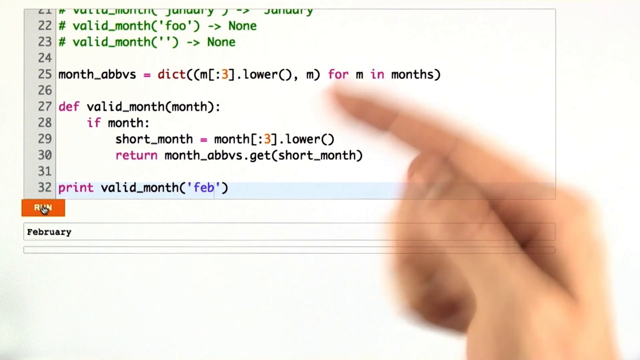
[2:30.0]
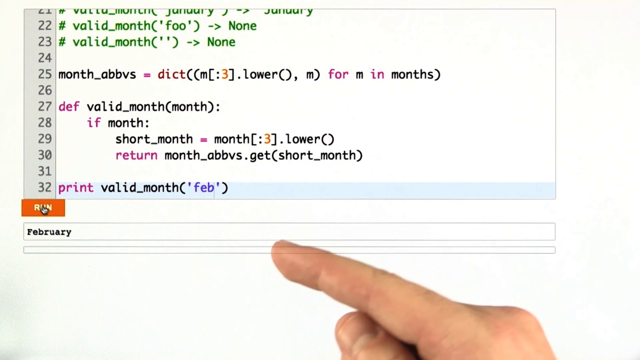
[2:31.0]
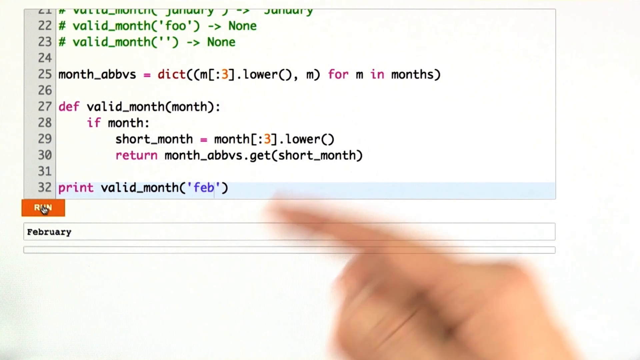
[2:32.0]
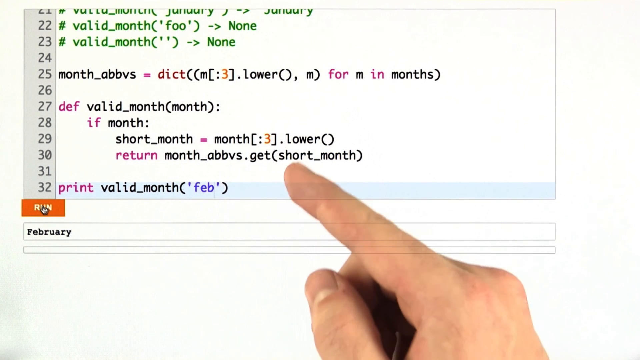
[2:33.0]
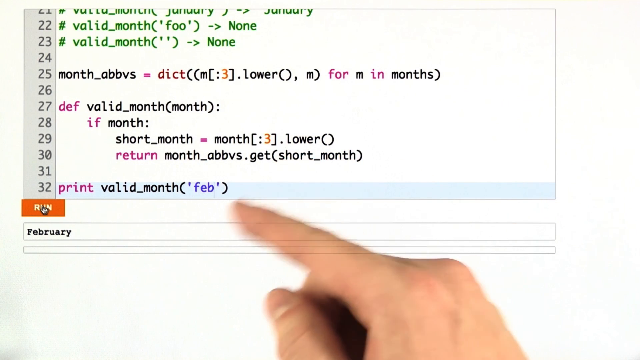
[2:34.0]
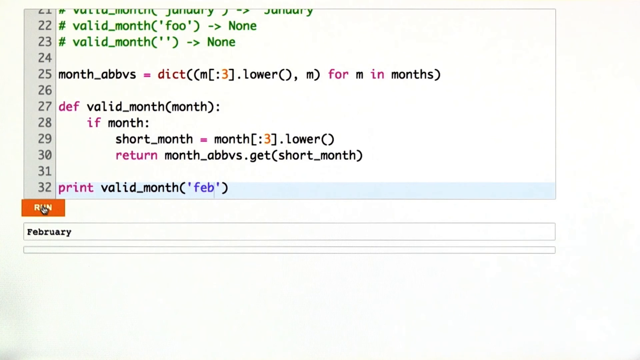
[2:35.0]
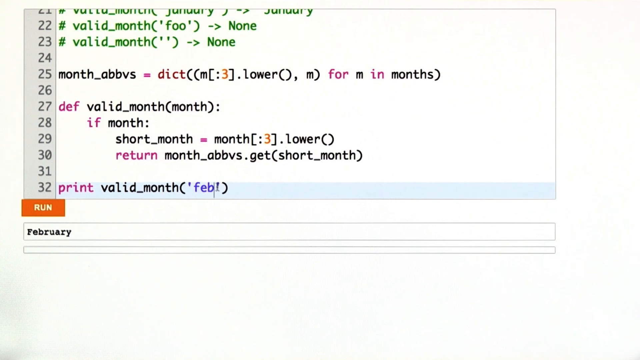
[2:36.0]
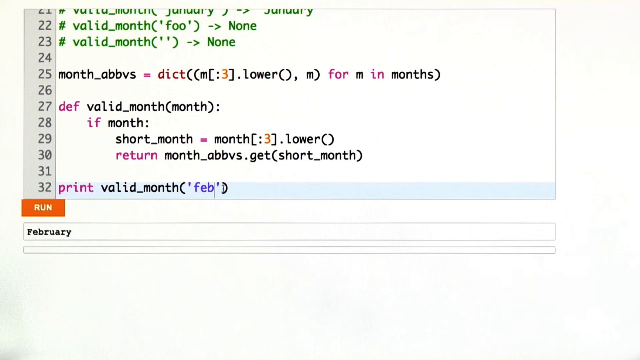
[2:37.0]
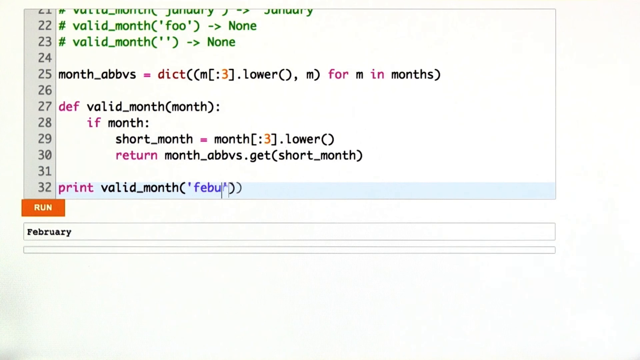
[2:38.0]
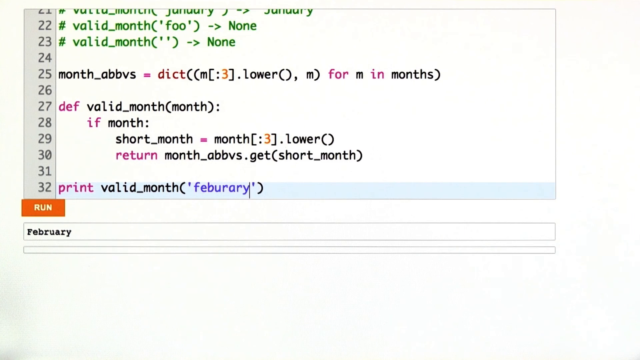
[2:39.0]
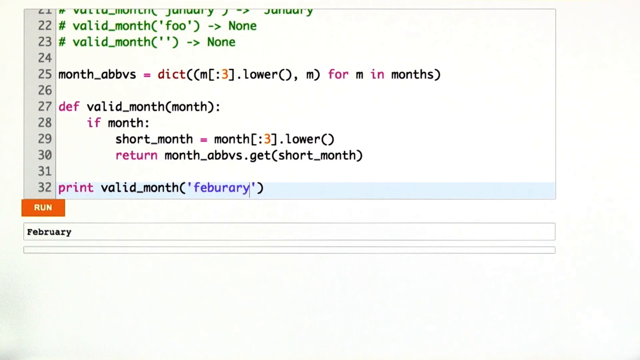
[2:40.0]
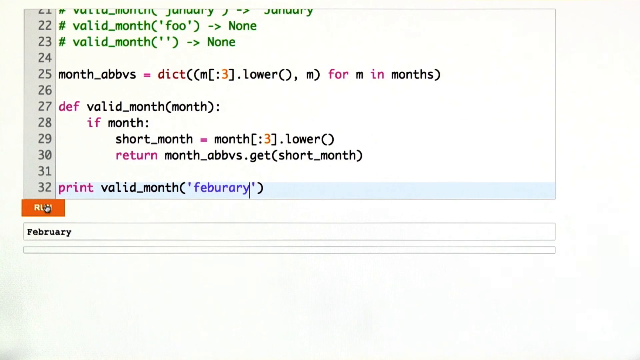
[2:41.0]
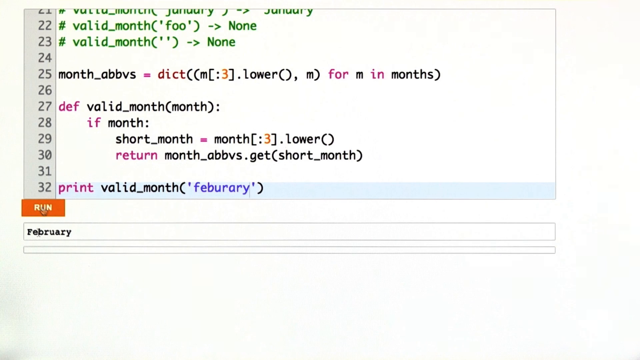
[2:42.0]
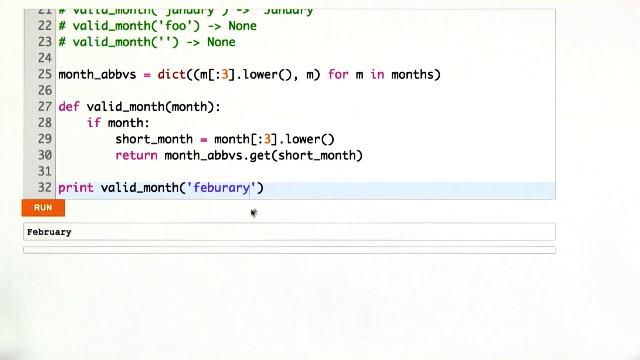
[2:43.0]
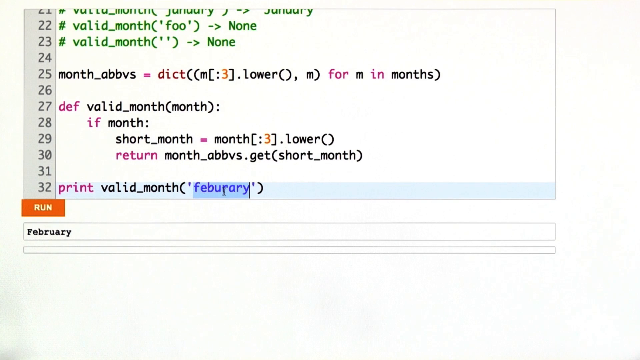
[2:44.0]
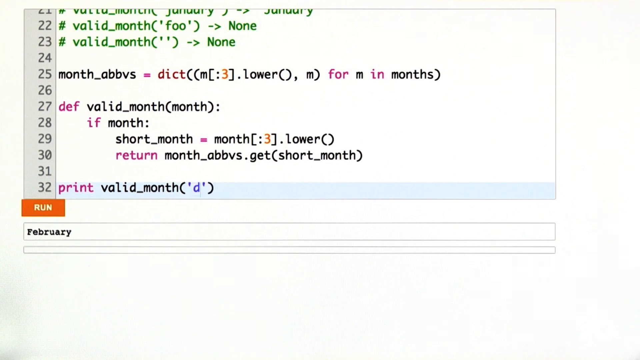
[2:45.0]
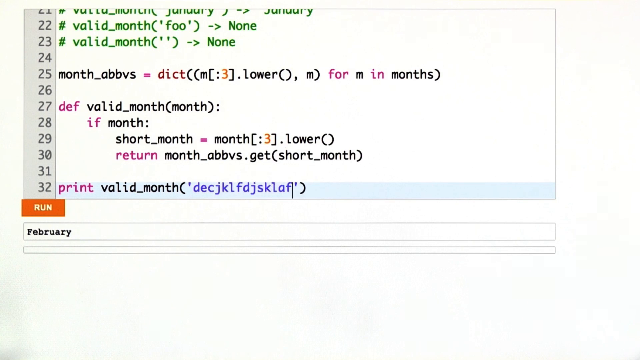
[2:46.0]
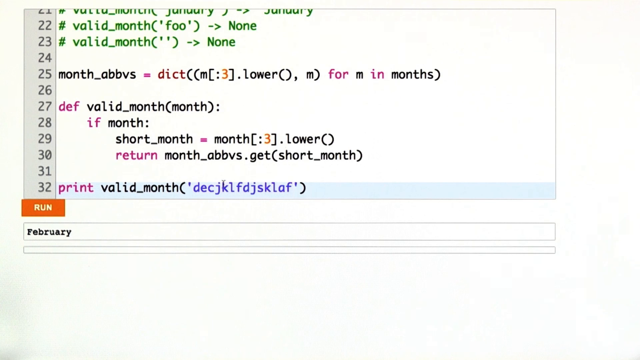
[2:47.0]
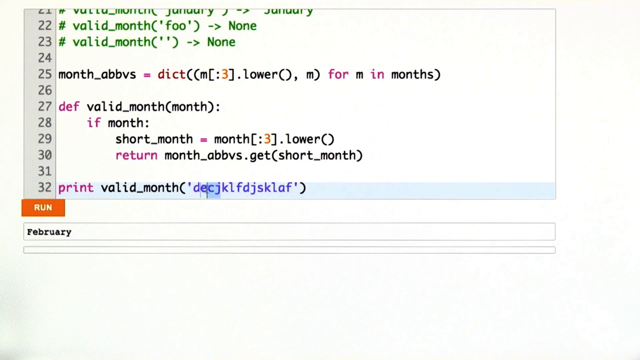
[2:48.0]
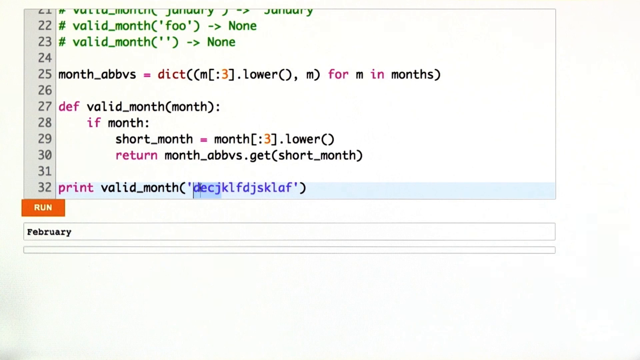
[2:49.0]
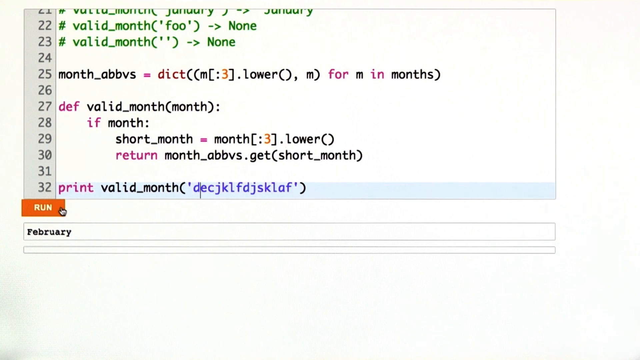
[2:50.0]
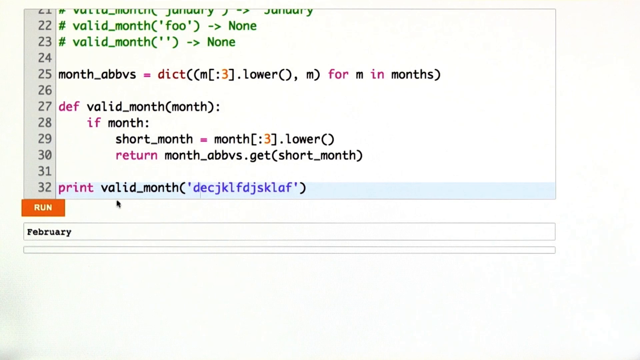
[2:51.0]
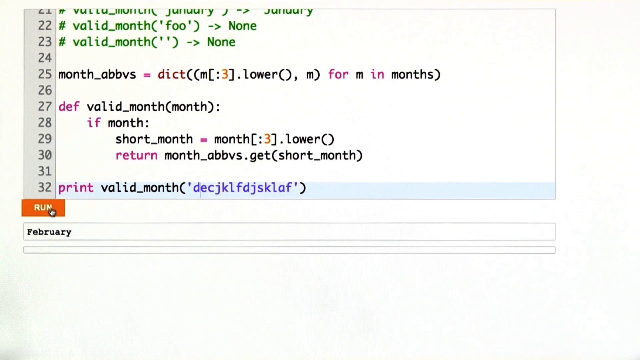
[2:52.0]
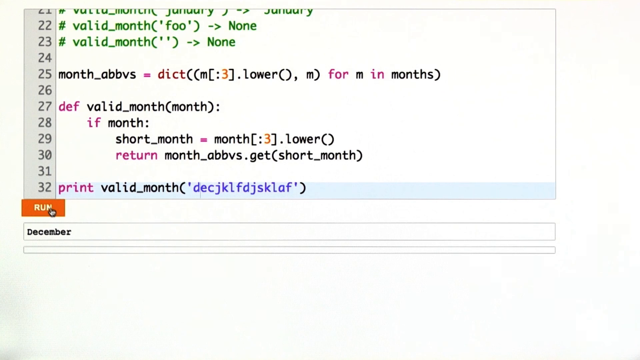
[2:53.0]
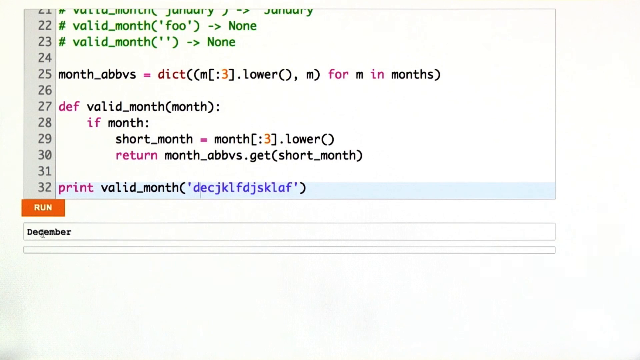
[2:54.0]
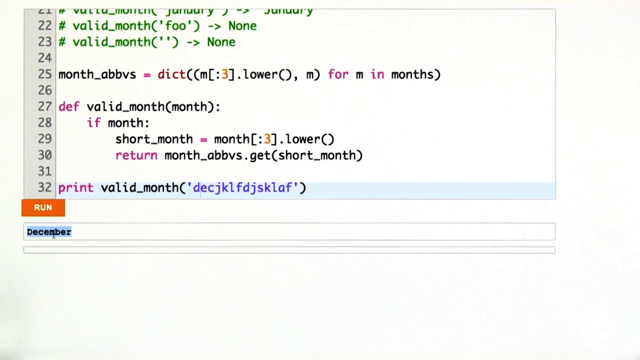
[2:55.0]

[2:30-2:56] The top of the screen has letters in green. A human hand holds a black digital pen and goes over the commands on the screen. In the middle, on line 25, the word "def" is in pink, and the rest of the words, "valid month" with "month" in parentheses, are in black. The pen hovers over the months. On line 31, "print valid month" is written; January is listed and then deleted, and July is put in parentheses. The black pen hovers over an orange box that says "run" and keeps hovering. The next screen shows the list of months in the year, all in purple, from January down through December. On another screen the black digital pen is put down, and the person's index finger points at the screen. At the very bottom, in much smaller print, the months of the year are listed. The finger continues to hover over the words of the commands without forming any clear pattern.